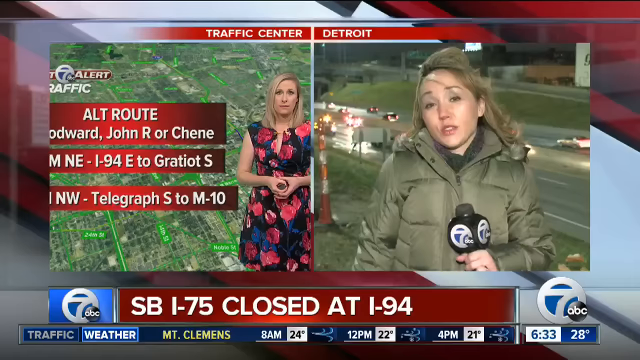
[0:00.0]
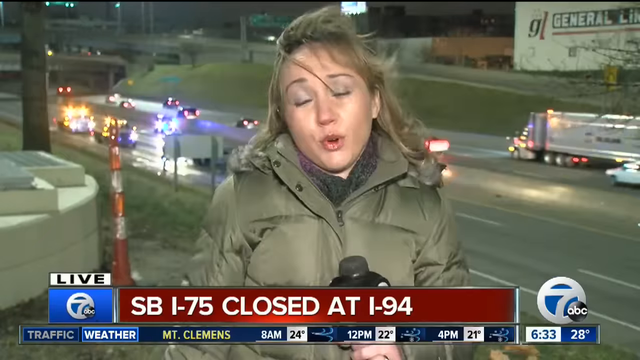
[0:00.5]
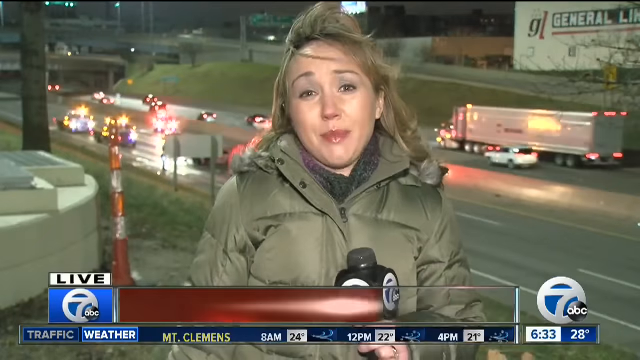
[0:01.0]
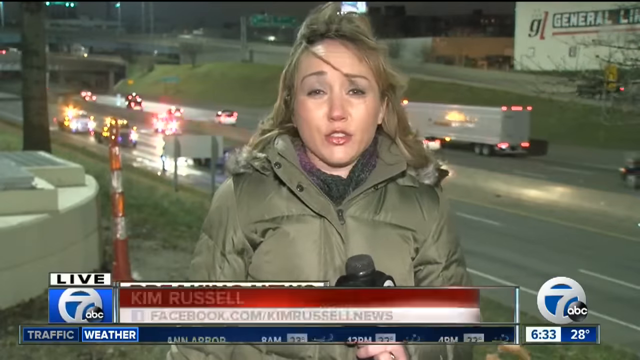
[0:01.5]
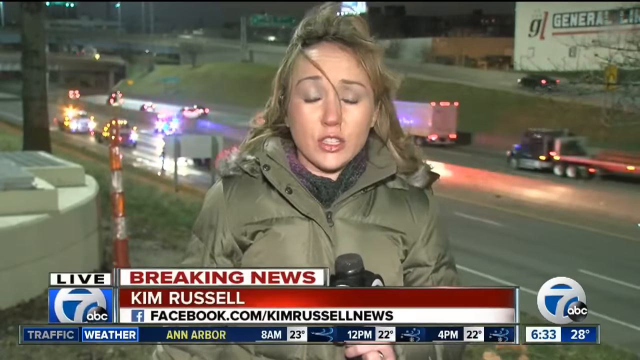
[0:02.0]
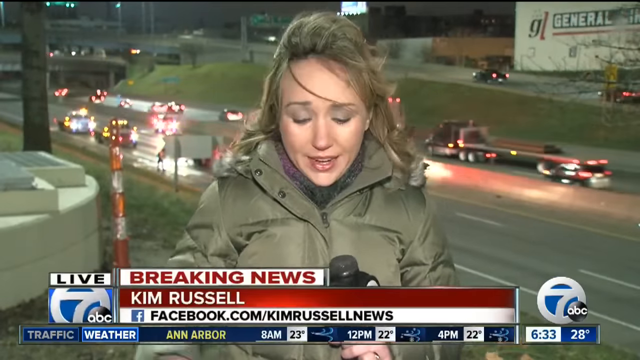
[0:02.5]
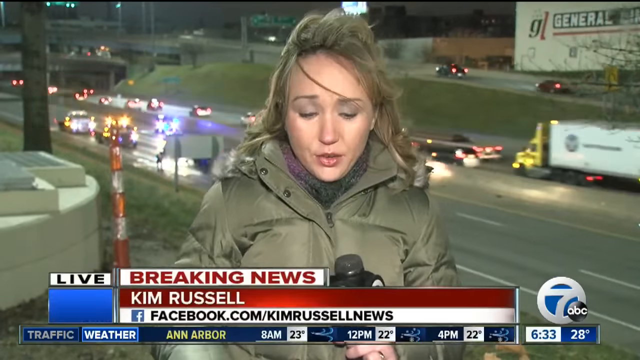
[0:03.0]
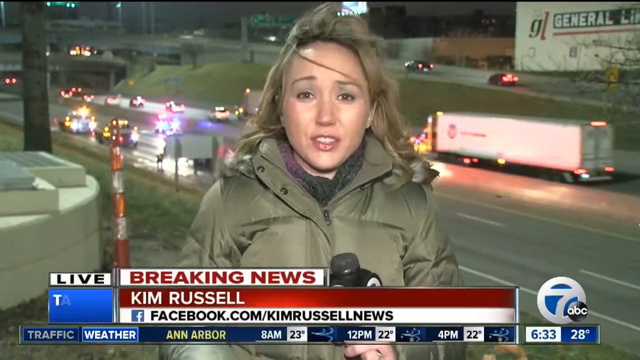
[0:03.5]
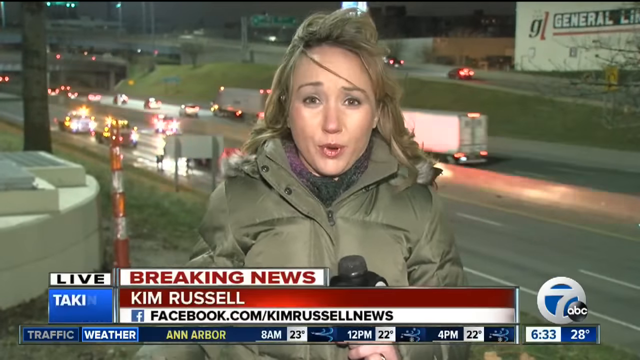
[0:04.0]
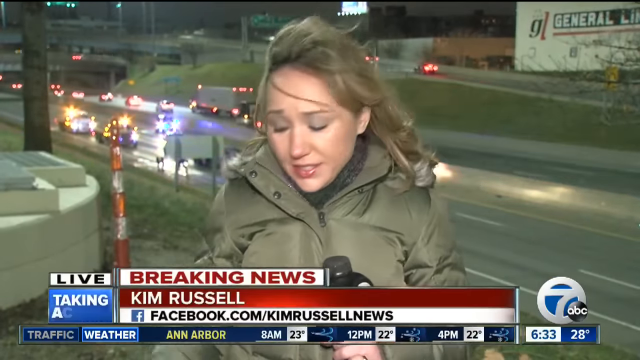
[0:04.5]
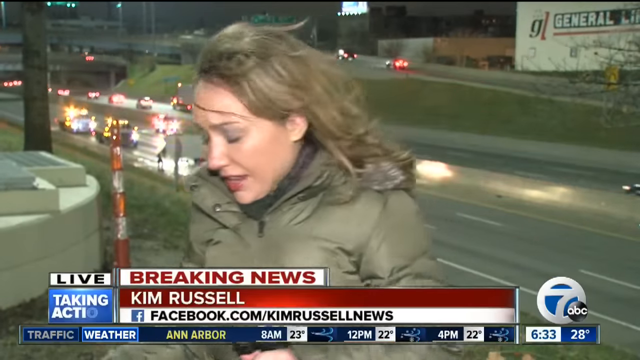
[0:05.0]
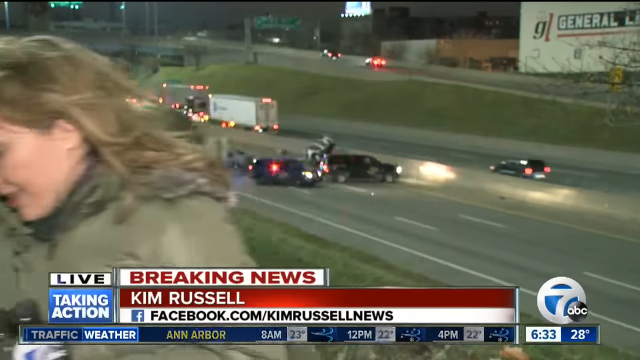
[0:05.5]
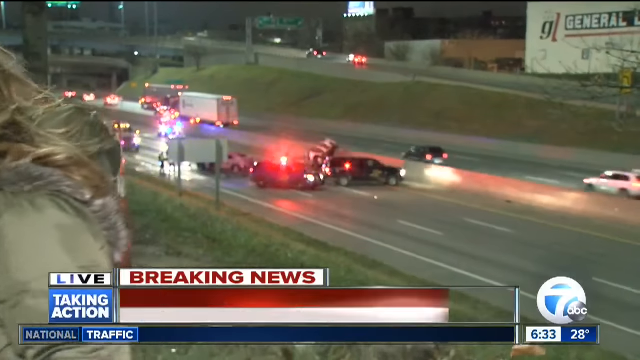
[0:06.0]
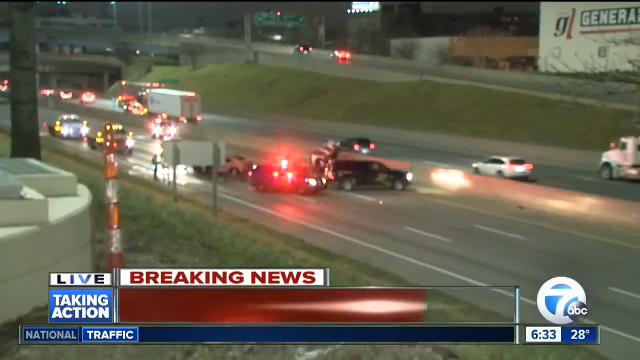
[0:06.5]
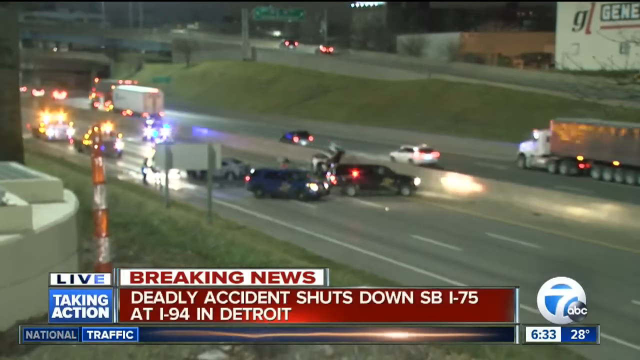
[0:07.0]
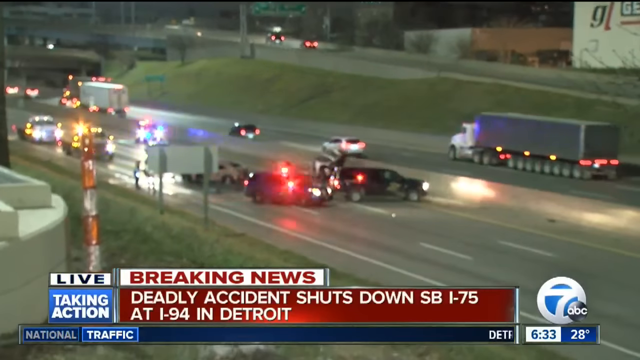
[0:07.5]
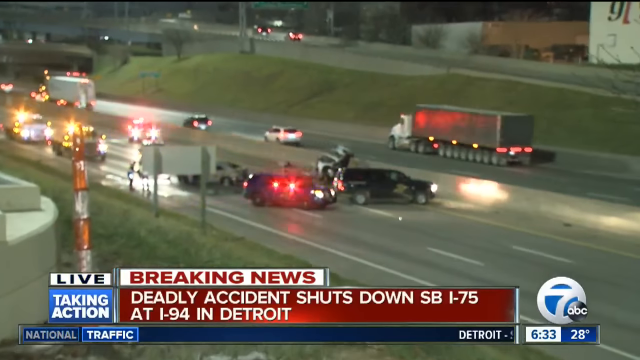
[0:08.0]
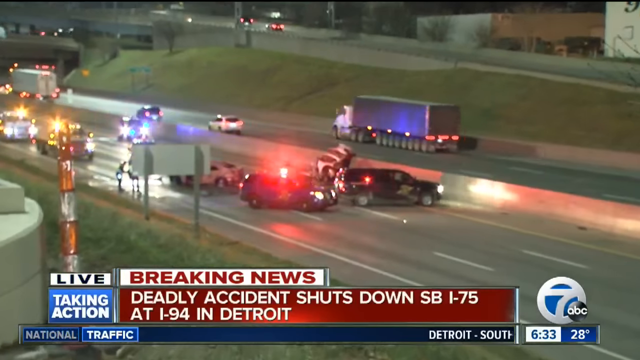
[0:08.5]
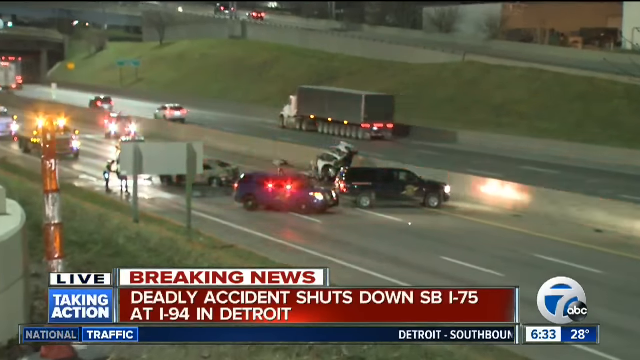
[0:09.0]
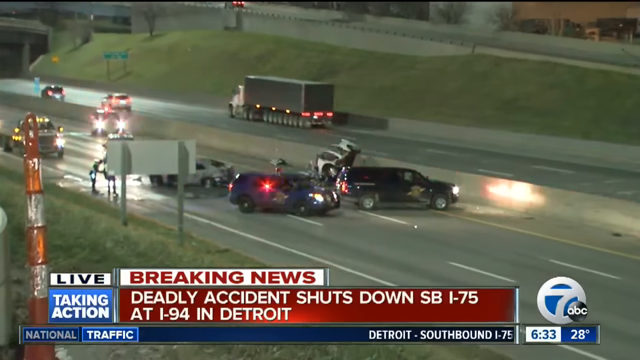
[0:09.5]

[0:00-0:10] A woman with long hair wearing a grey jacket reports the news outdoors while many vehicles flash blue, red, yellow and green lights. The reporter is named Kim and is reporting on an accident. Her hair moves in the wind. One of the vehicles with flashing lights seems to be a police car, along with other vehicles that respond to accidents. The camera sometimes shows Kim from the front and sometimes from the side, so the moving cars and the accident scene behind can be seen. Cars on the other side of the road do not stop and keep moving. The accident apparently is deadly, and Kim looks unhappy about what happened.